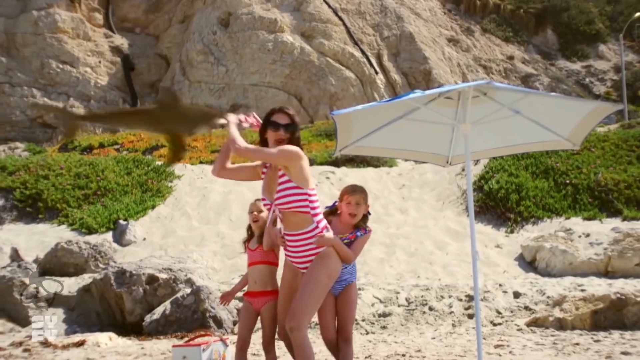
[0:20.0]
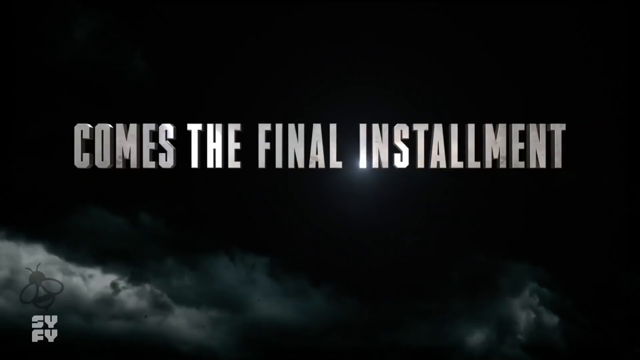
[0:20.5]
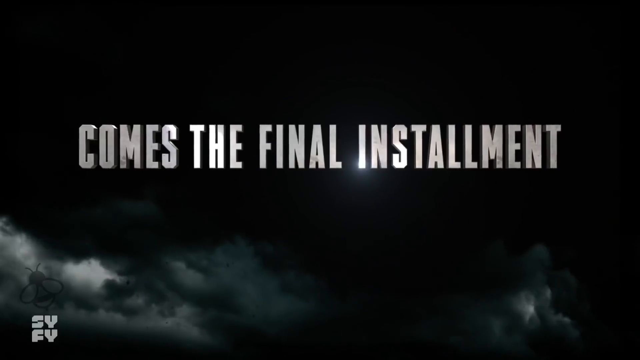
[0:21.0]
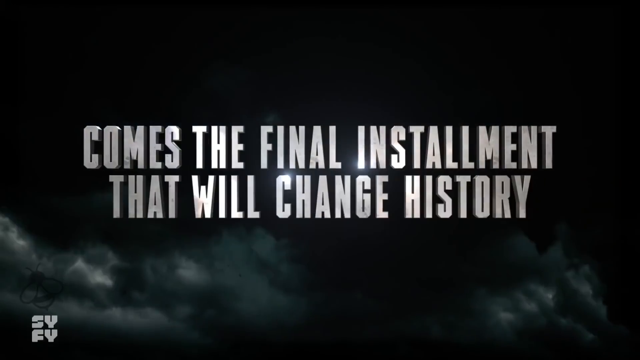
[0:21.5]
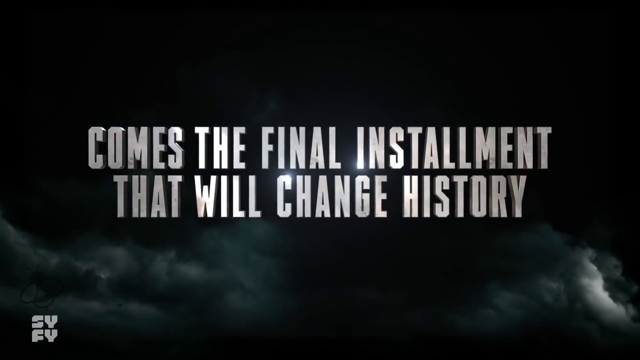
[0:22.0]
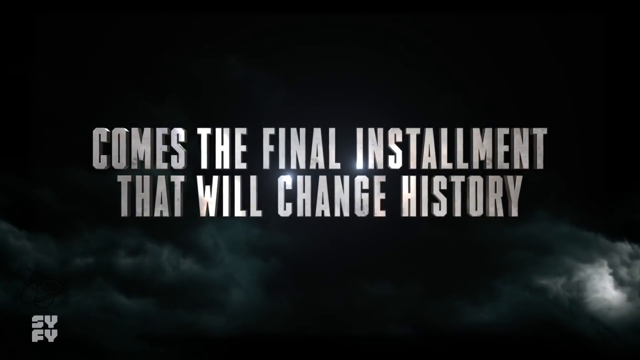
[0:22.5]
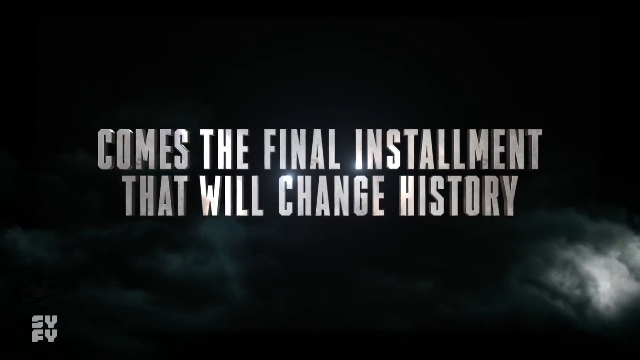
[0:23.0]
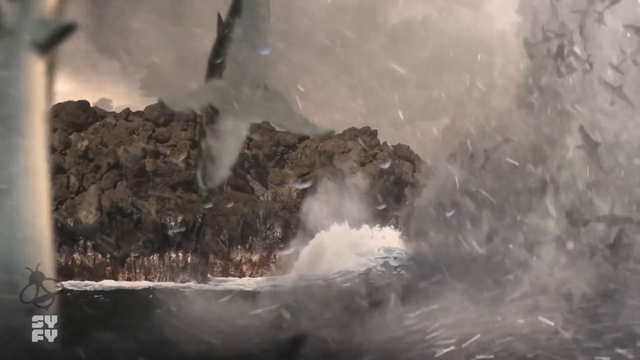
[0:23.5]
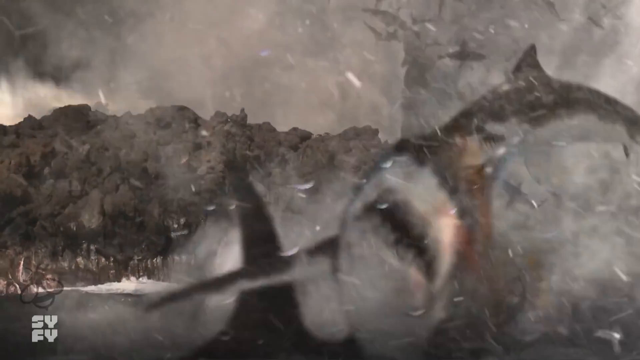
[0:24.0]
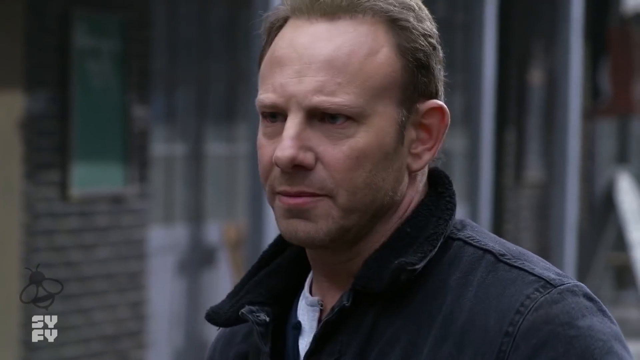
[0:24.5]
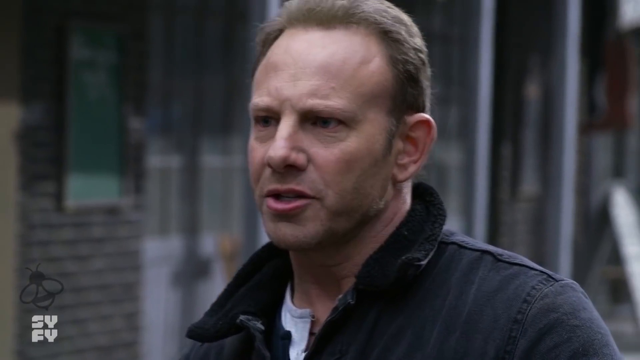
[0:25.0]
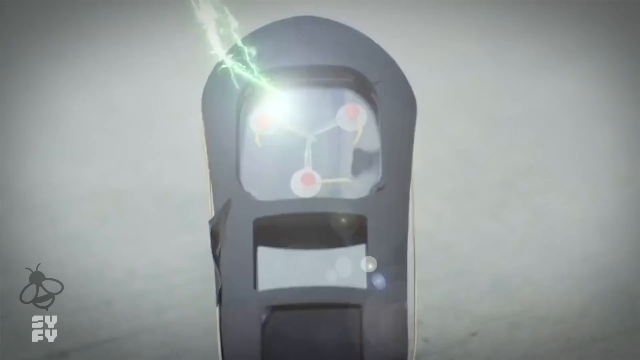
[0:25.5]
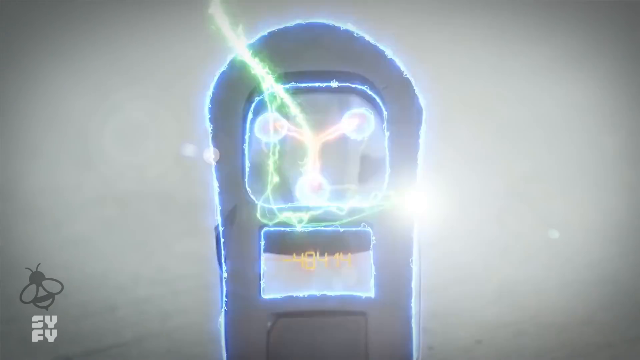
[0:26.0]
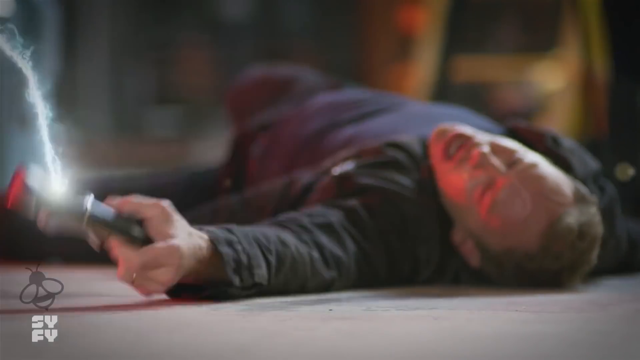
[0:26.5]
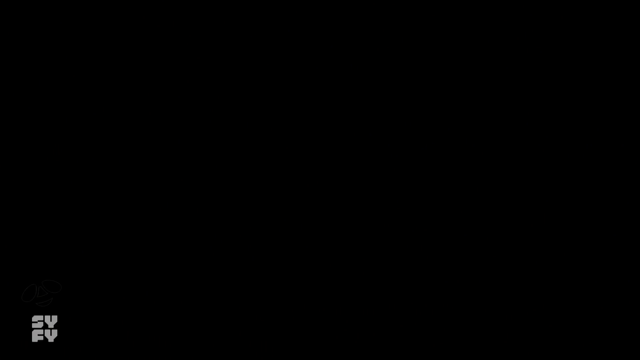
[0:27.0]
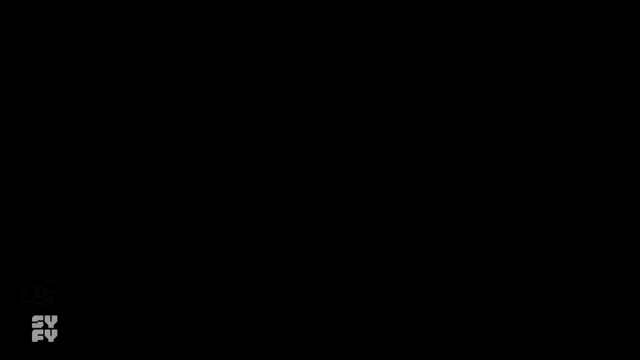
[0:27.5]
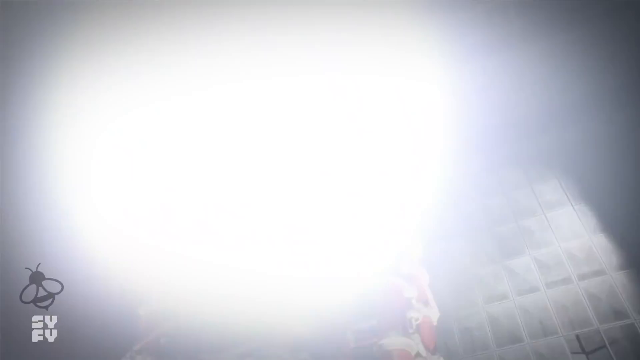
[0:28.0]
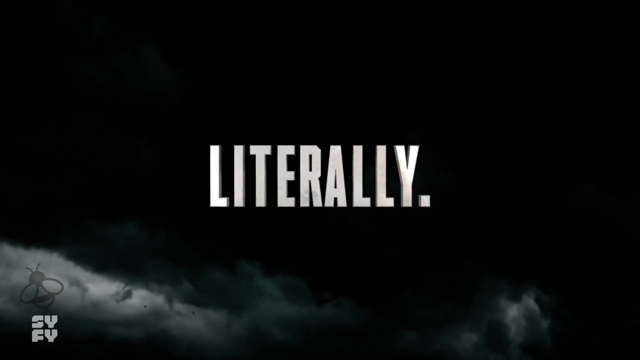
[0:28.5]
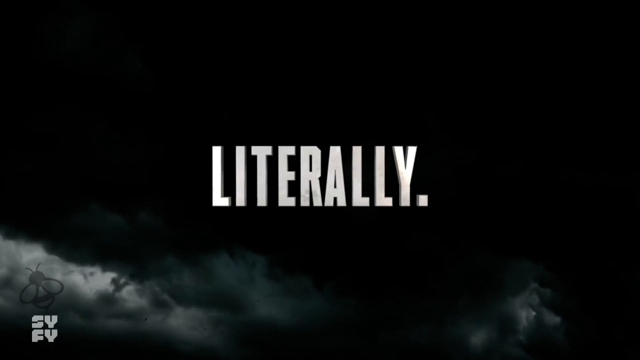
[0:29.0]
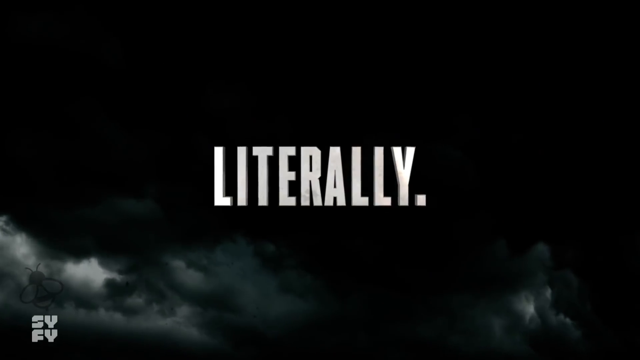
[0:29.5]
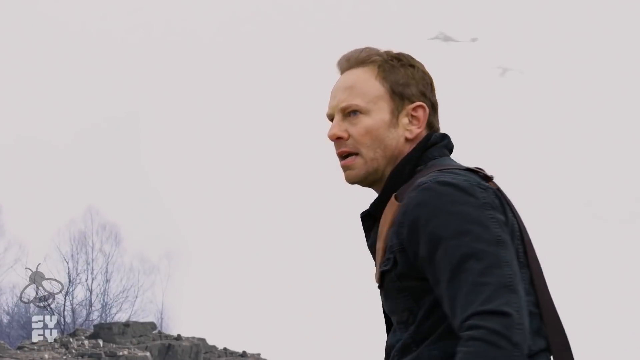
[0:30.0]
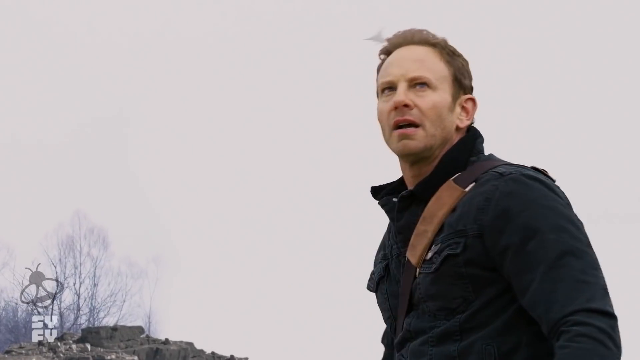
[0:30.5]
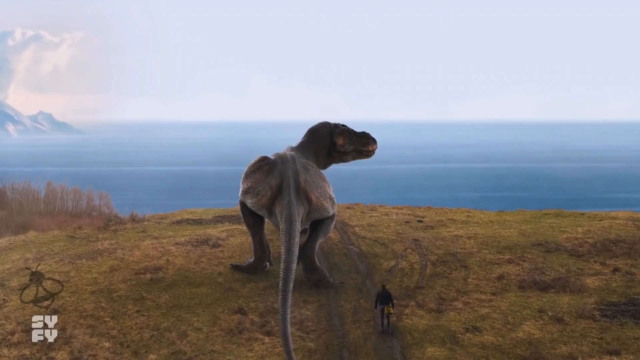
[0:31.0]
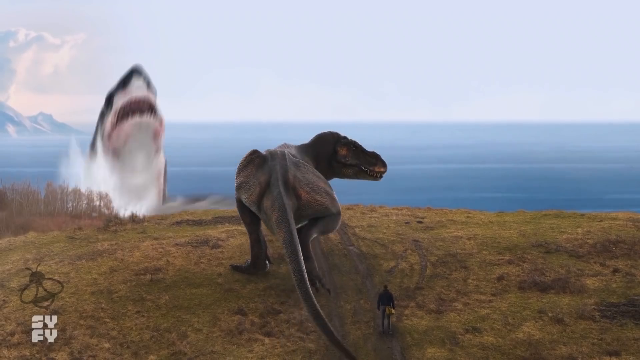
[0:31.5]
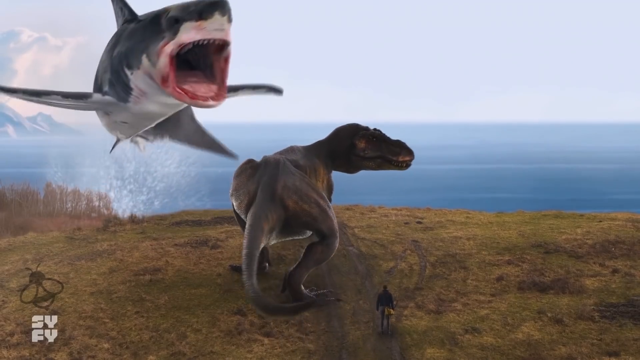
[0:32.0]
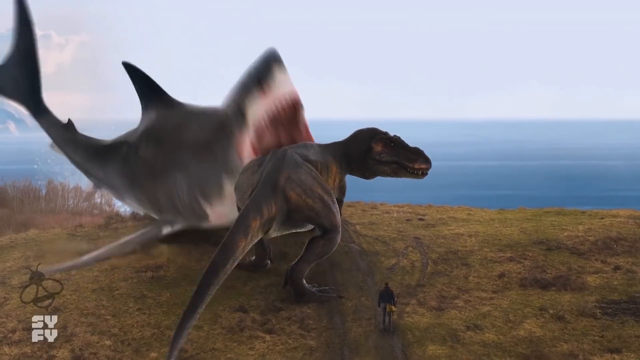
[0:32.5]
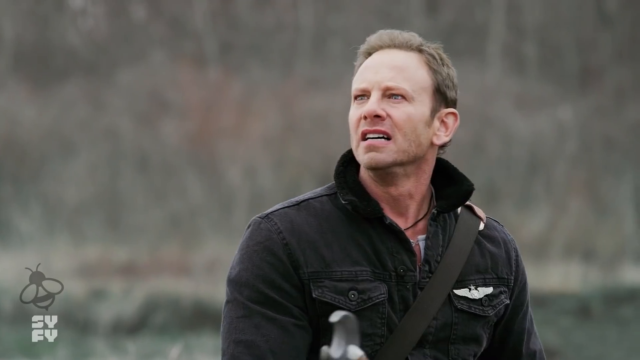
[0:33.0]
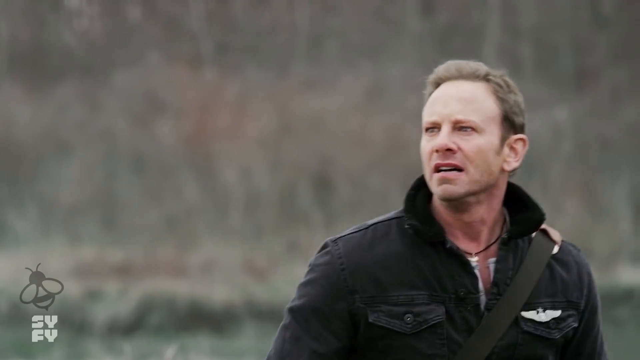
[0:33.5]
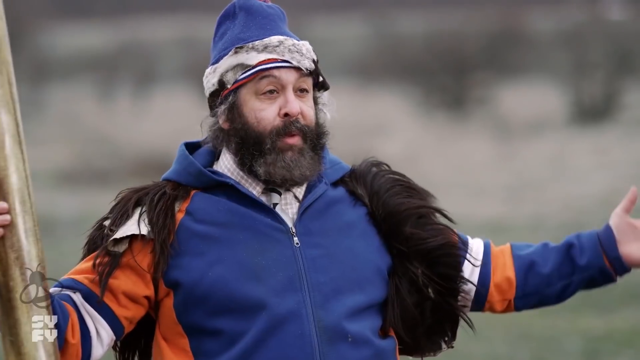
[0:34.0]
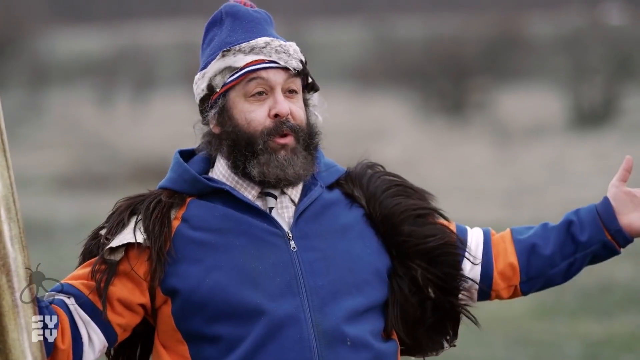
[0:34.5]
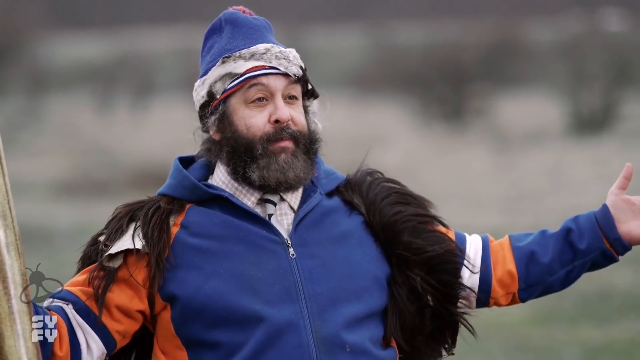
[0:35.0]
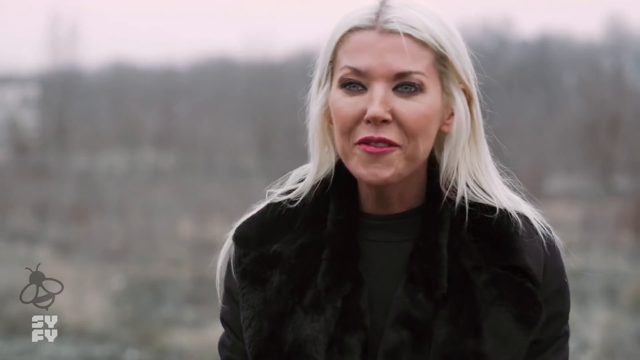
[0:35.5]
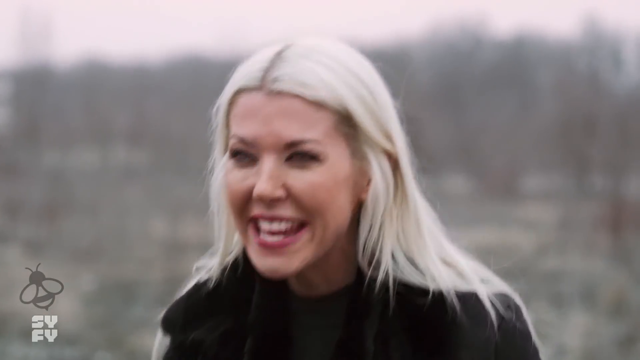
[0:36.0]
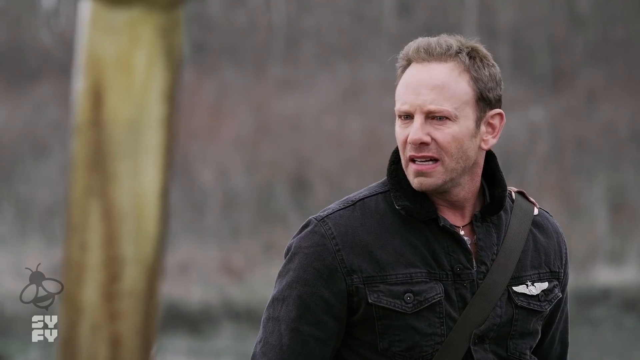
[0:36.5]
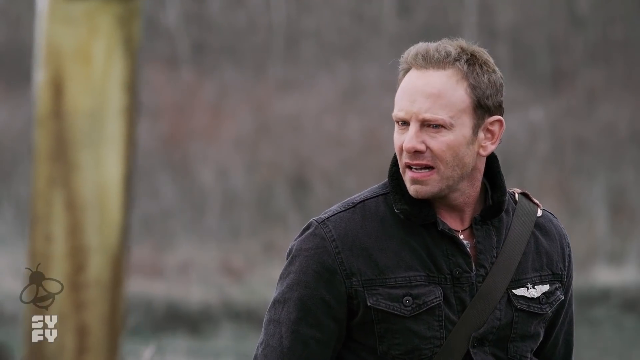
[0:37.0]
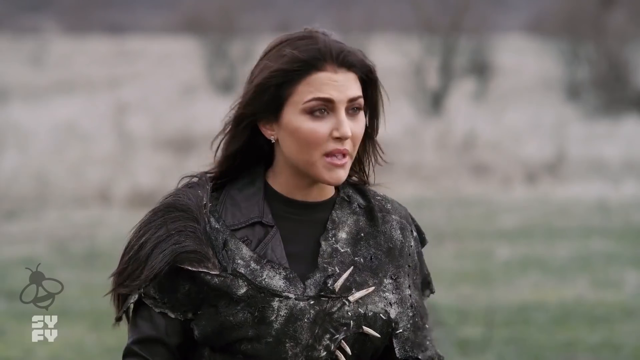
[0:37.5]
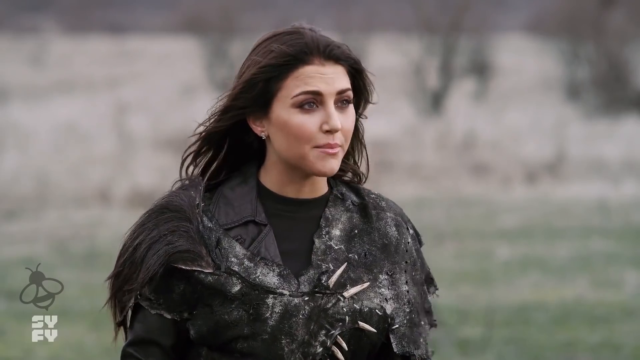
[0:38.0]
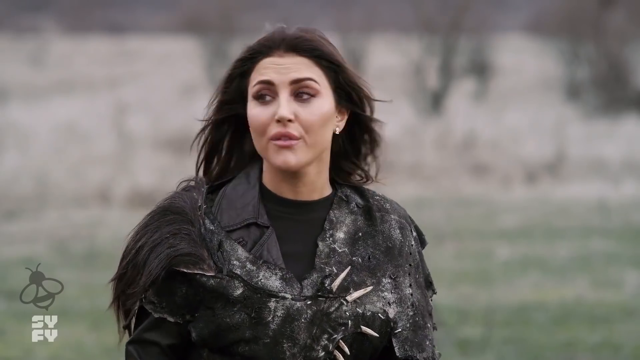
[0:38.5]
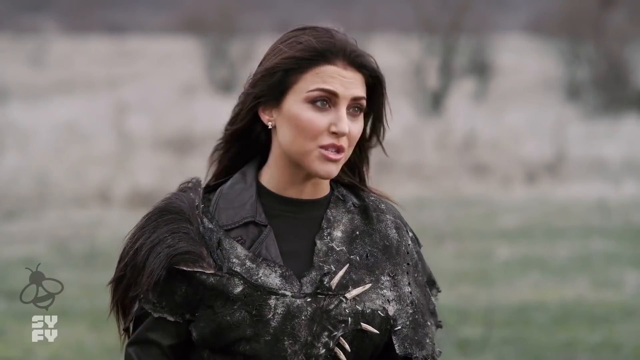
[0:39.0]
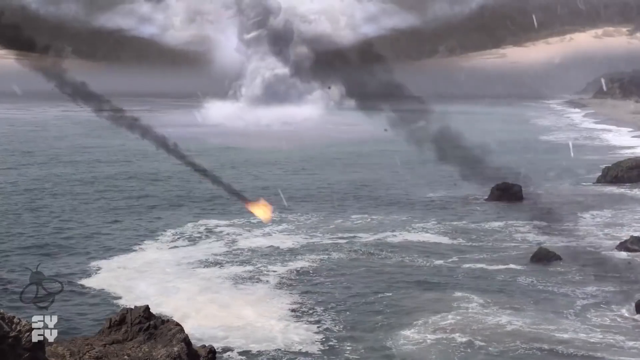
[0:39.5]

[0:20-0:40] The woman defending her children hits another shark with the shark she is holding. A screen with a dark cloud reads "this comes the final installment that will change history," and sharks are lifted out of the ocean into the tornado. One of the characters talks to people. A man holds a device with electricity pulsing through it; he is electrocuted, and the electricity lifts him up so that he levitates and goes into a metallic contraption. The dark cloud screen appears again, reading "literally." The electrocuted man is next to a tyrannosaurus rex when a giant shark jumps out of the ocean and bites the T-rex, and the man backs up. Other characters appear, several of them together. A rock on fire from a volcano falls into the ocean.